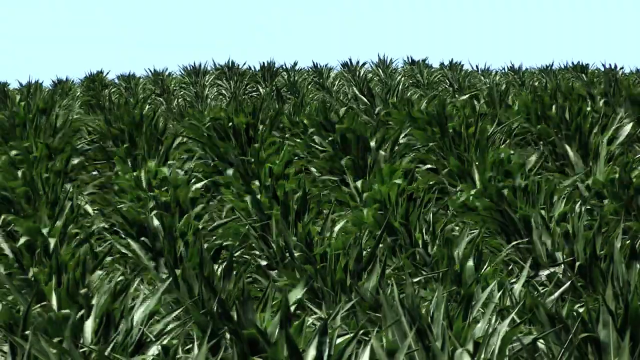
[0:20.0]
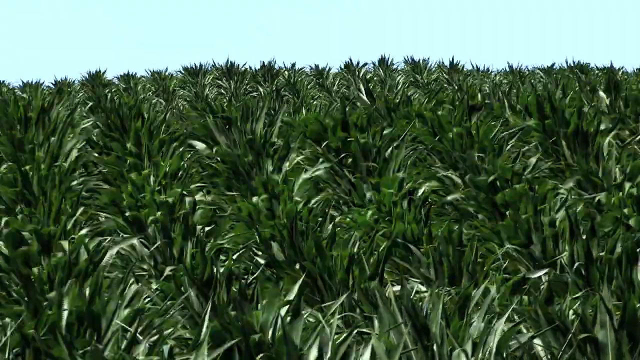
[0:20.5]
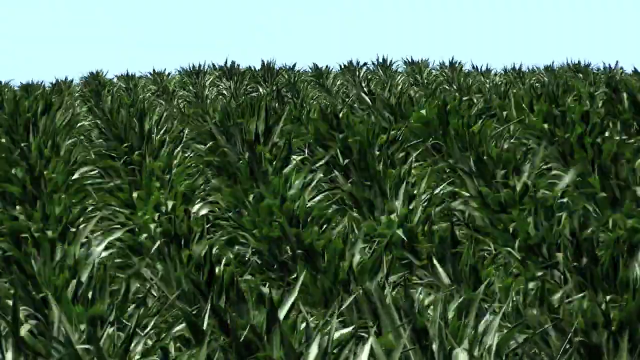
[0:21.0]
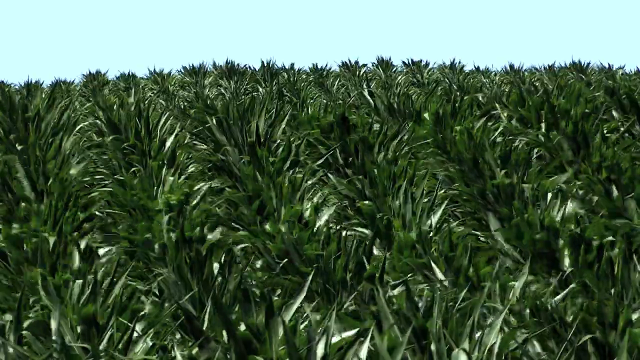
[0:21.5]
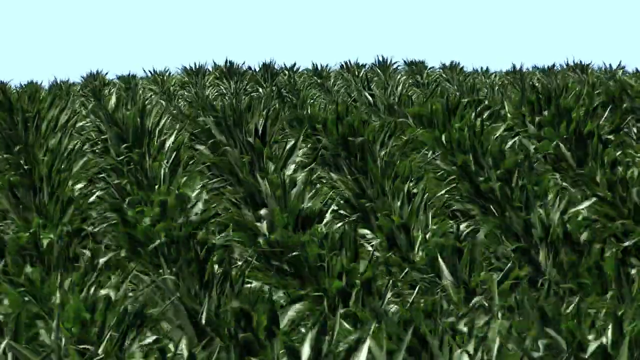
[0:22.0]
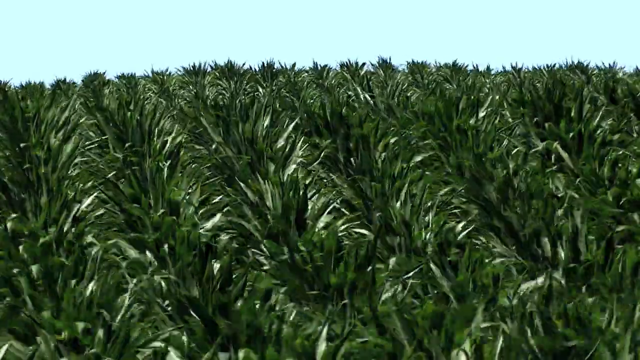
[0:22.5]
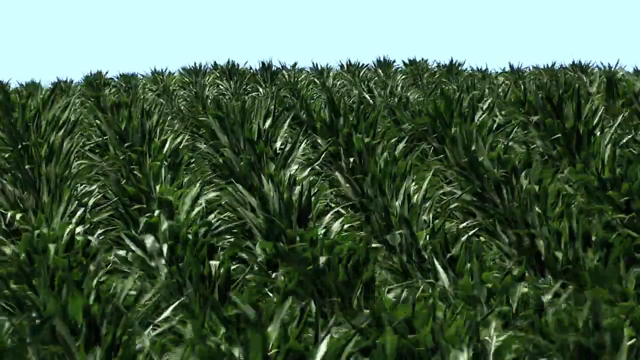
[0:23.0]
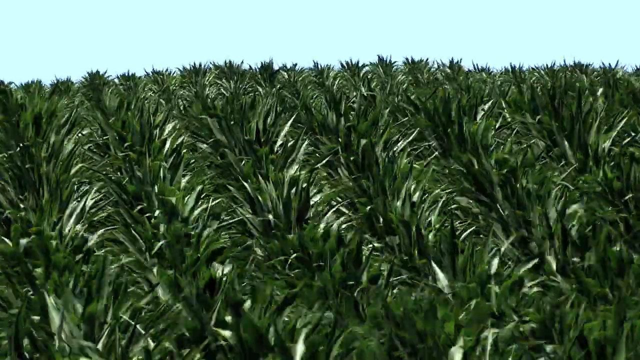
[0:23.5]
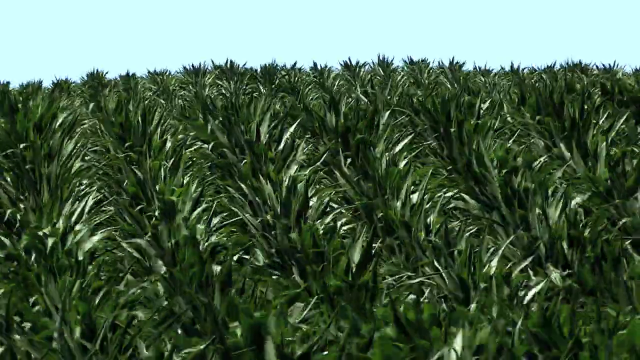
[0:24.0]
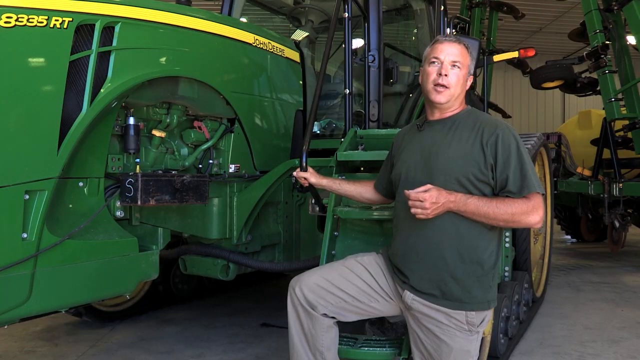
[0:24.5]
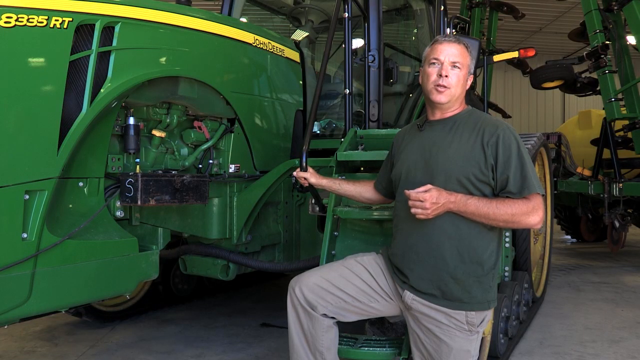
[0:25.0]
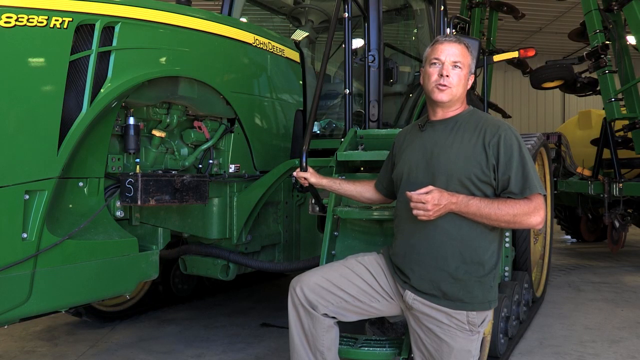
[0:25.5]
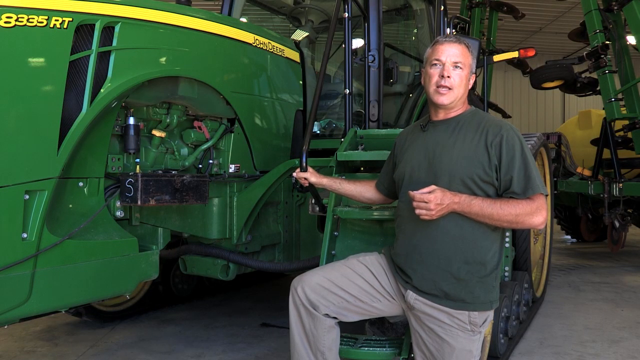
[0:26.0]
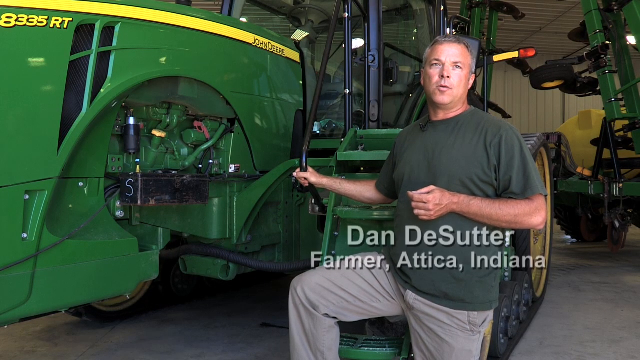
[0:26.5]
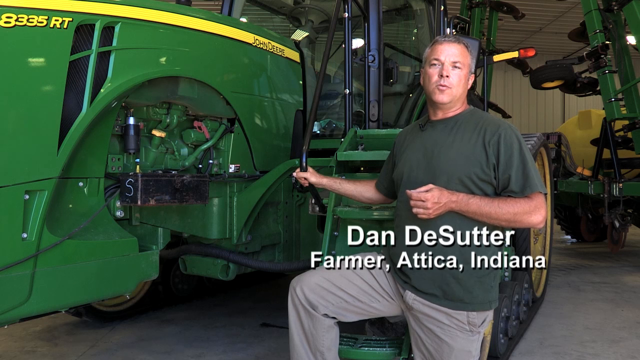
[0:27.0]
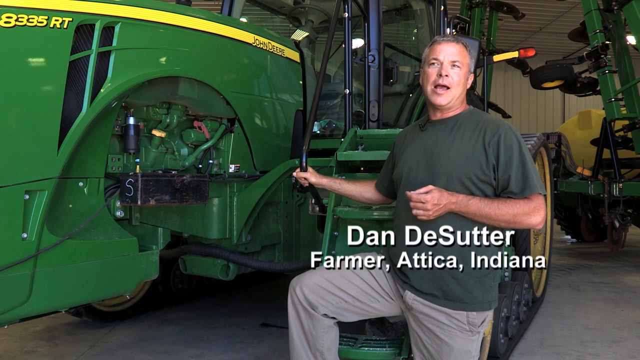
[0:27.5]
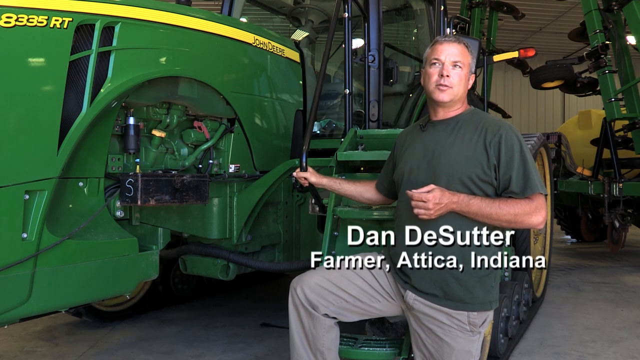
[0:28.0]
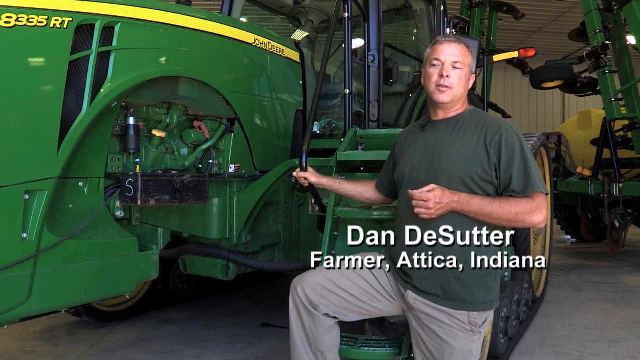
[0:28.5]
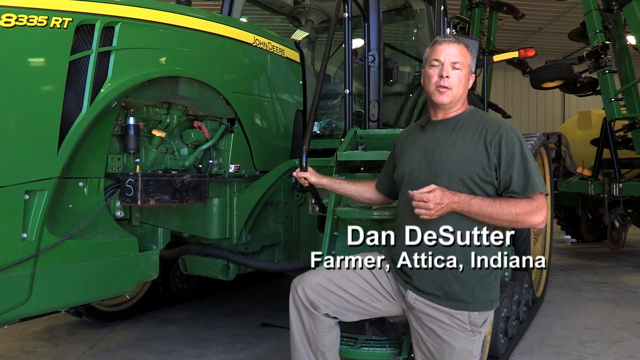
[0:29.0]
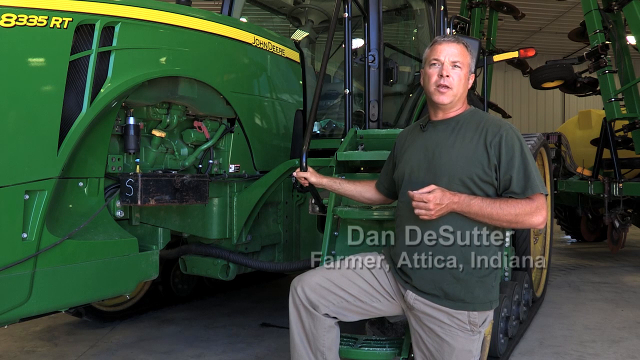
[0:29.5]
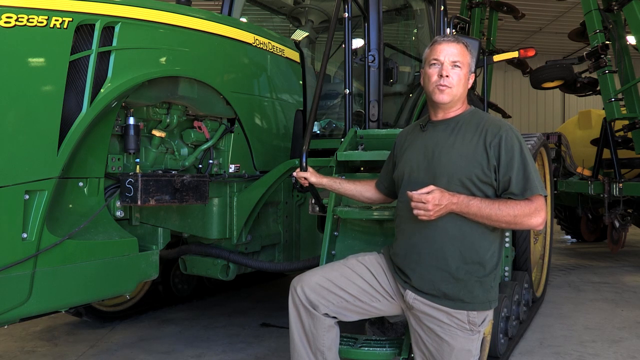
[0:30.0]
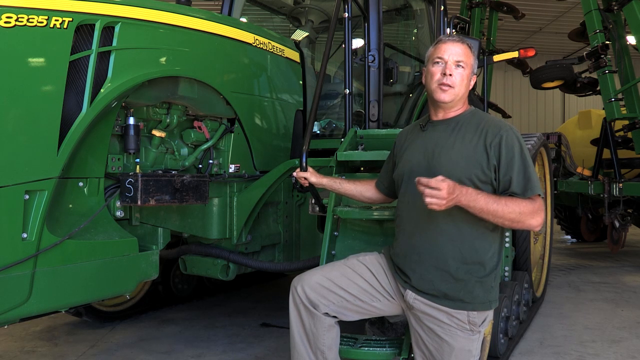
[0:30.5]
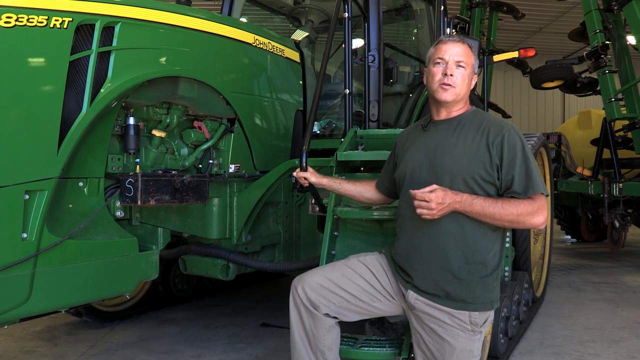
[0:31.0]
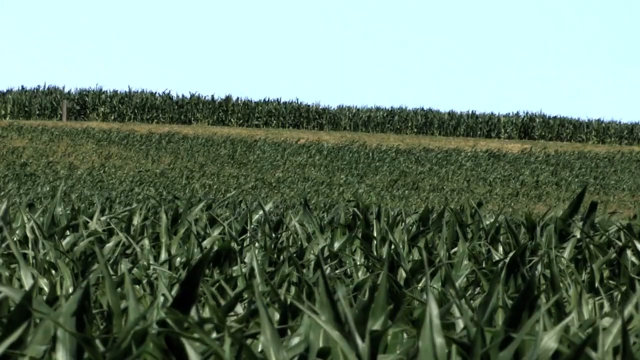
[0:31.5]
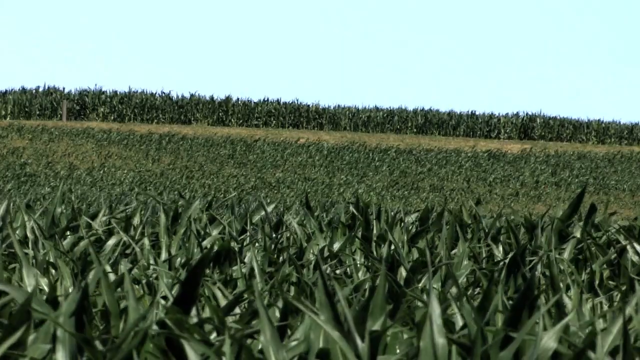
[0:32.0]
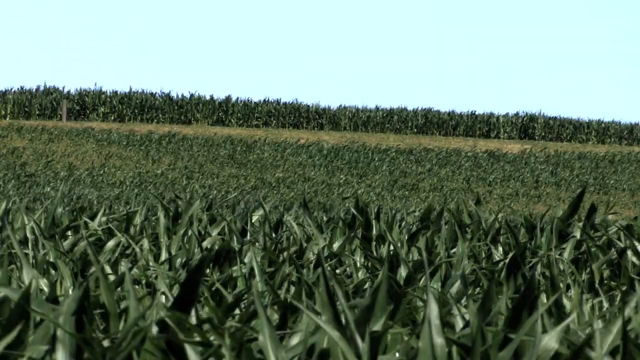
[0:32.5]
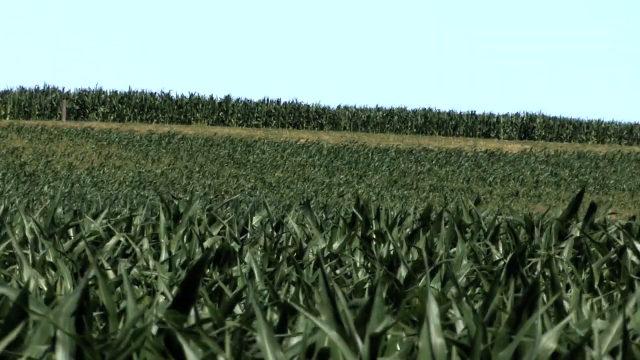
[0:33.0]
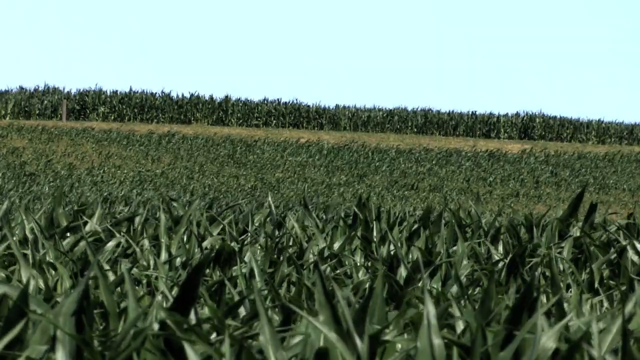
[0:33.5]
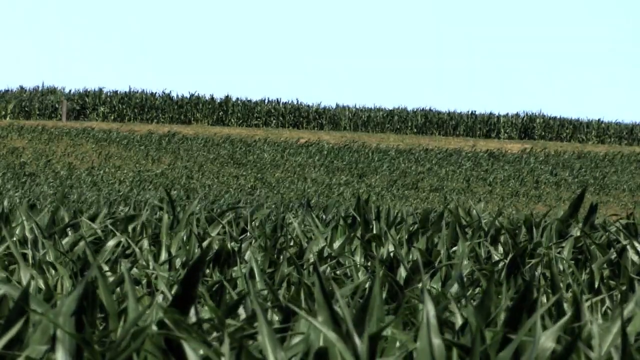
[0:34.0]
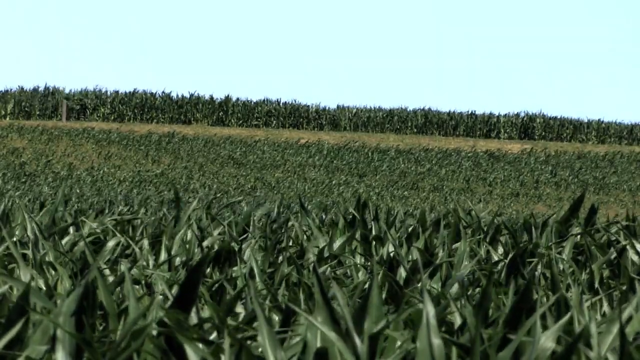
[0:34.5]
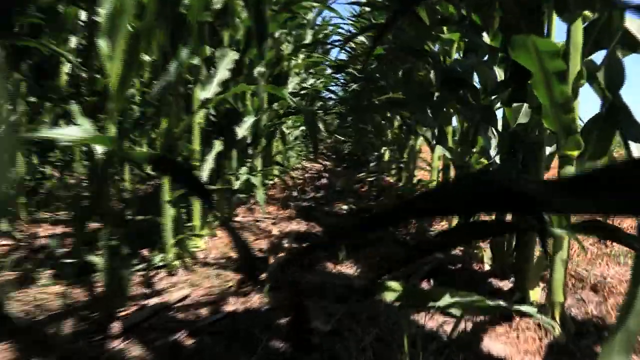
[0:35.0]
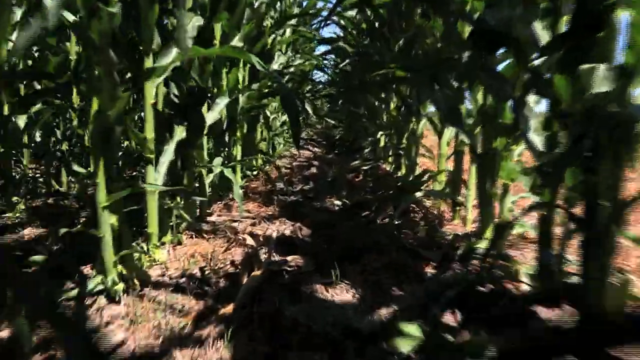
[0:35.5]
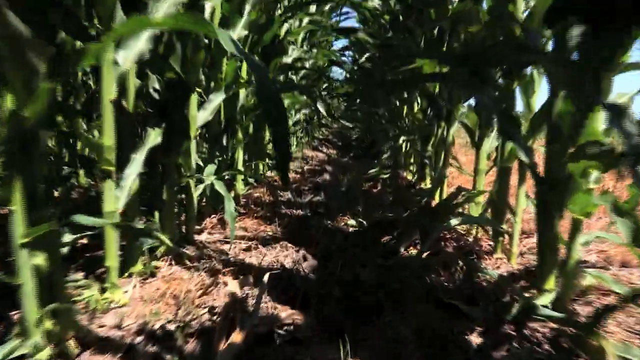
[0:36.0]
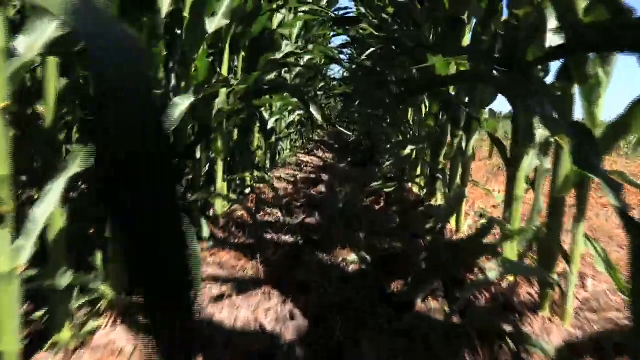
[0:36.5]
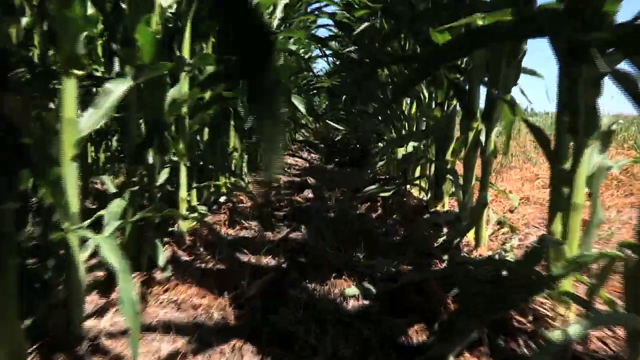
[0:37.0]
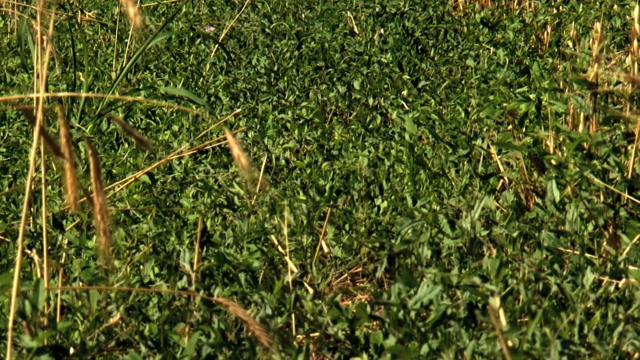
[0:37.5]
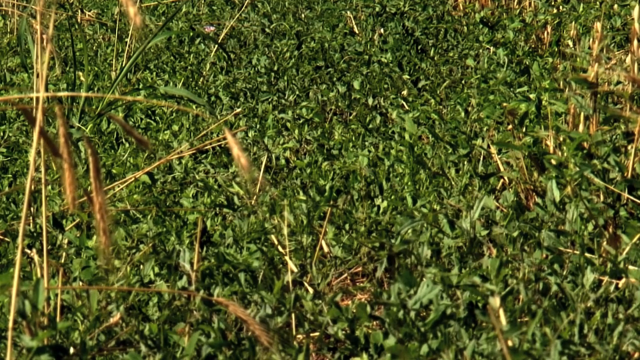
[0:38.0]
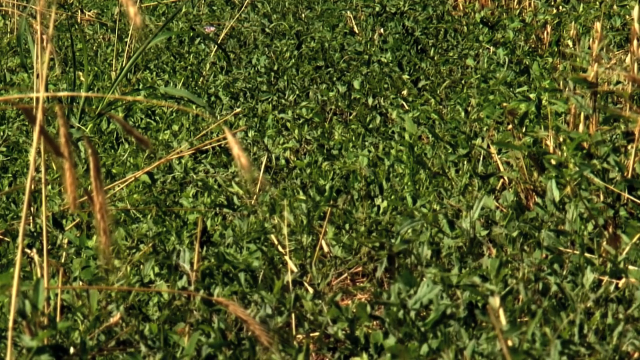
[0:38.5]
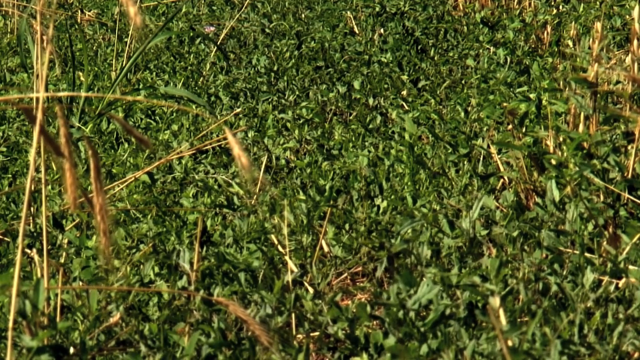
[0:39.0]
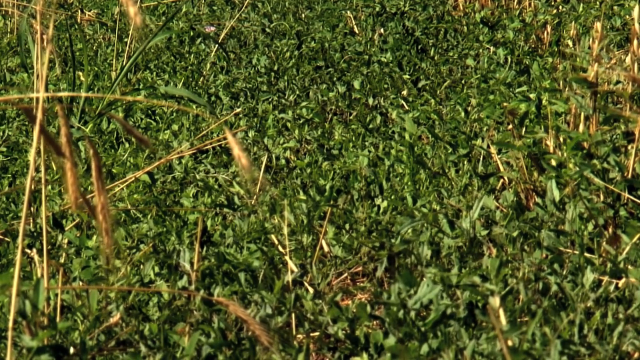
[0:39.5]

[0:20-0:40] The corn sways a lot in the wind. A person then appears talking in front of a very large green tractor. In the corner of the screen, up high, "8335RT" is written, and in the middle of the tractor, on a yellow strip, "John Deere" is written. The person's name appears on the screen: Dan DeSutter, an Indian farmer. The view returns to the very green cornfield swaying in the wind, and the camera moves into the middle of the cornfield, where a path like a tunnel runs through the very tall corn, which casts shade over it, like a corn maze.